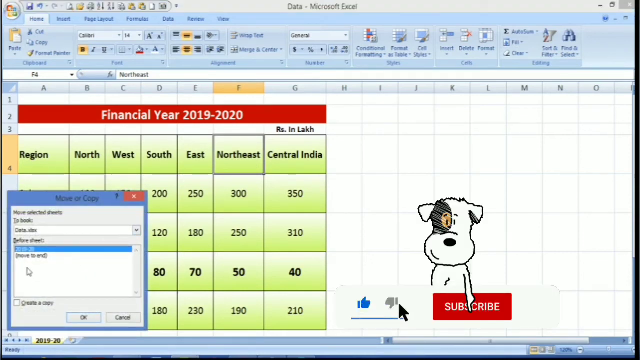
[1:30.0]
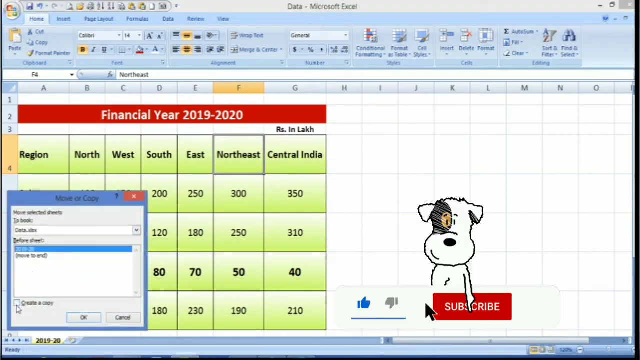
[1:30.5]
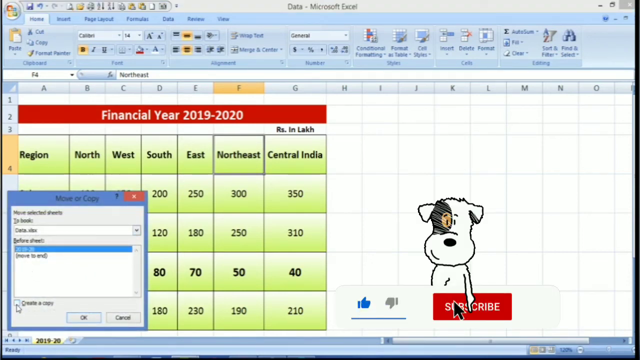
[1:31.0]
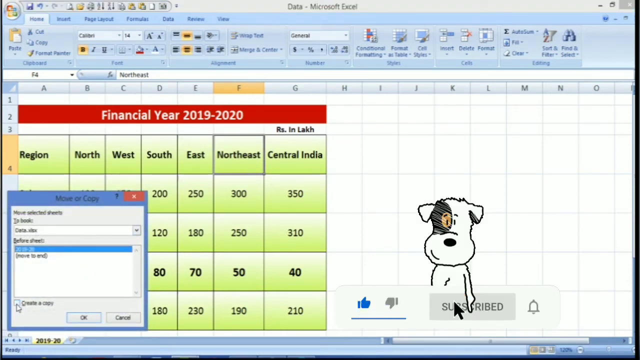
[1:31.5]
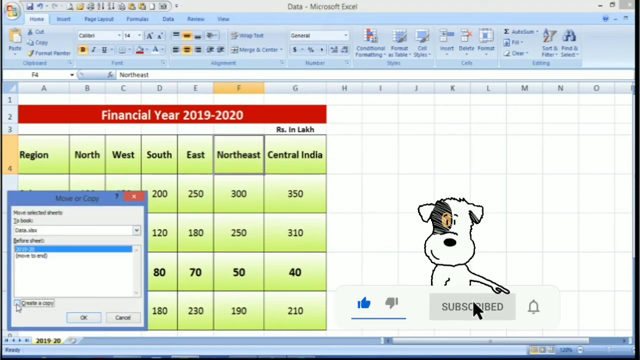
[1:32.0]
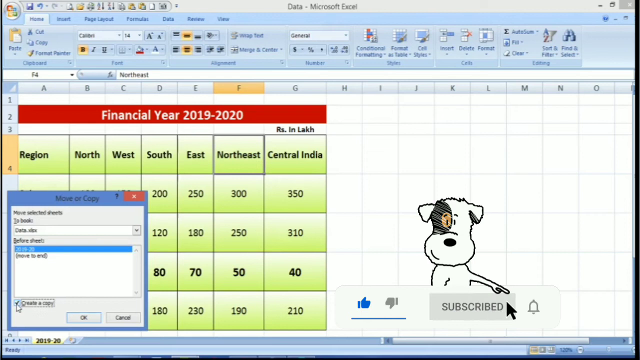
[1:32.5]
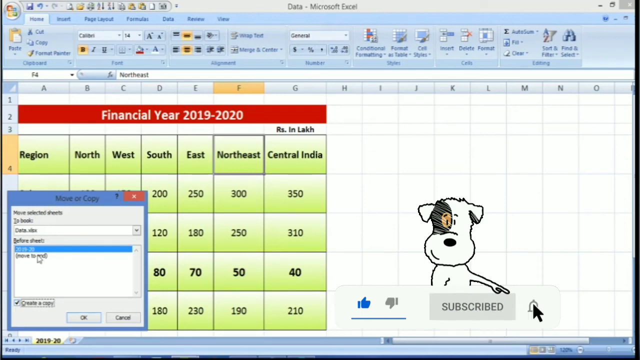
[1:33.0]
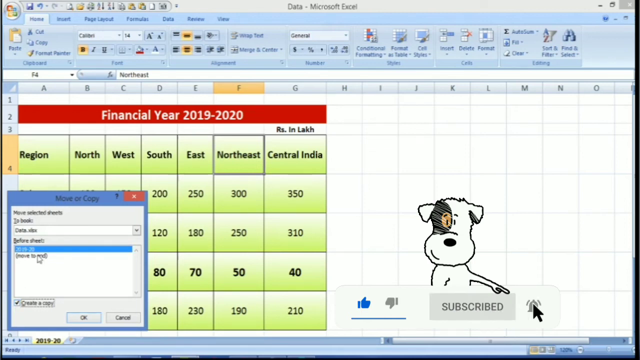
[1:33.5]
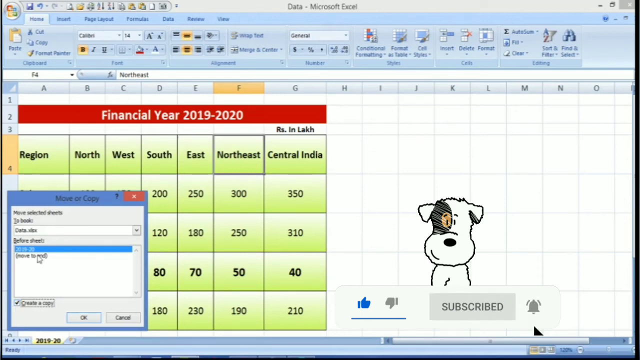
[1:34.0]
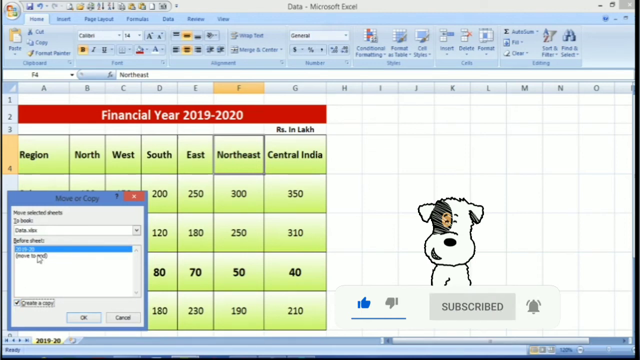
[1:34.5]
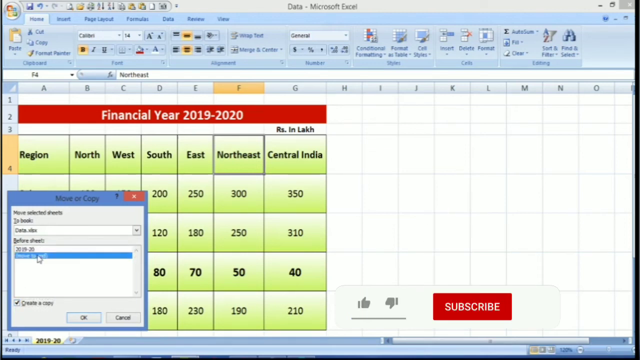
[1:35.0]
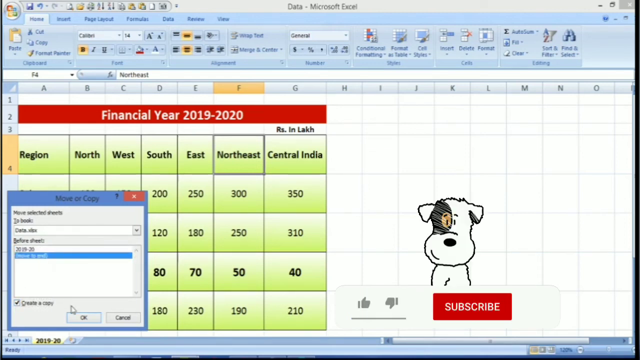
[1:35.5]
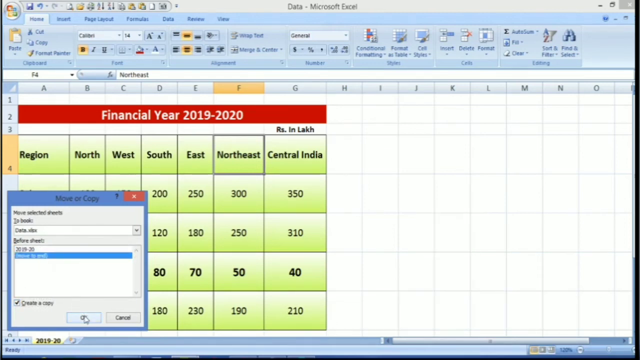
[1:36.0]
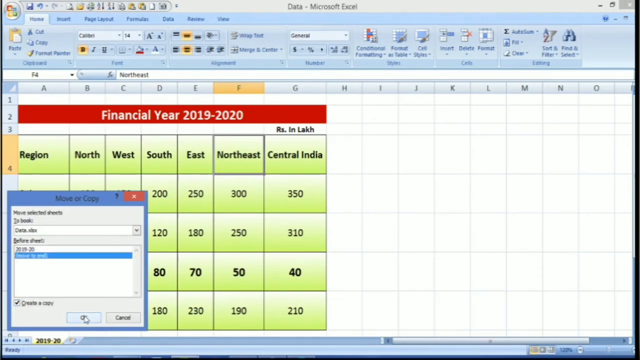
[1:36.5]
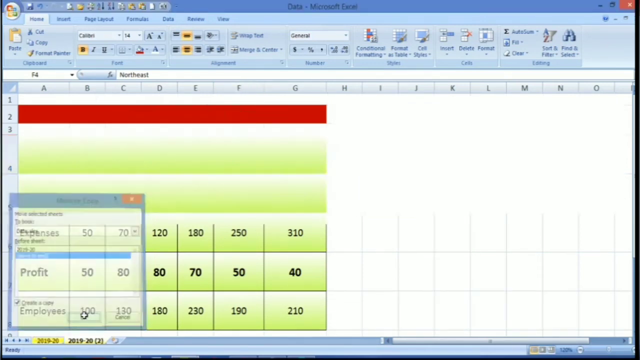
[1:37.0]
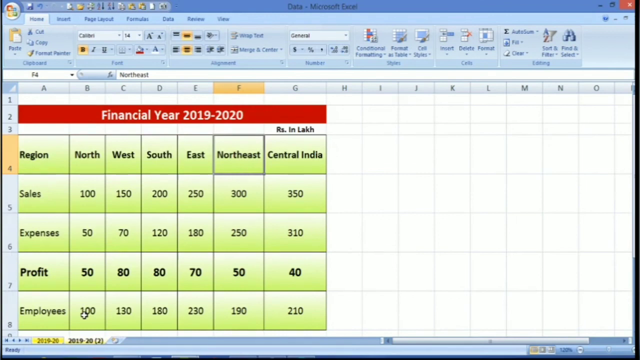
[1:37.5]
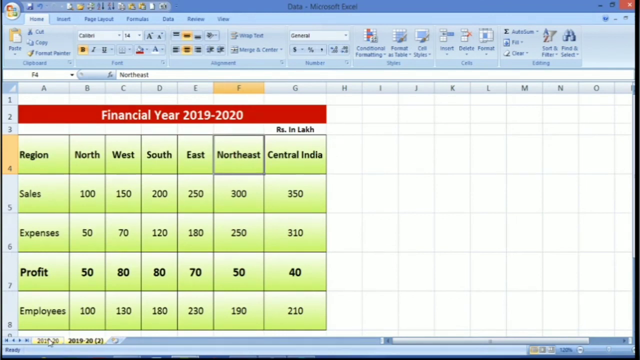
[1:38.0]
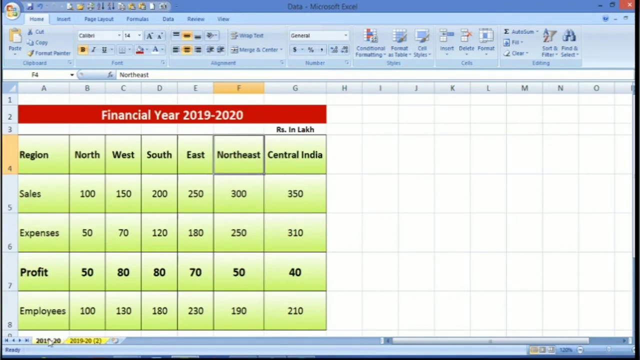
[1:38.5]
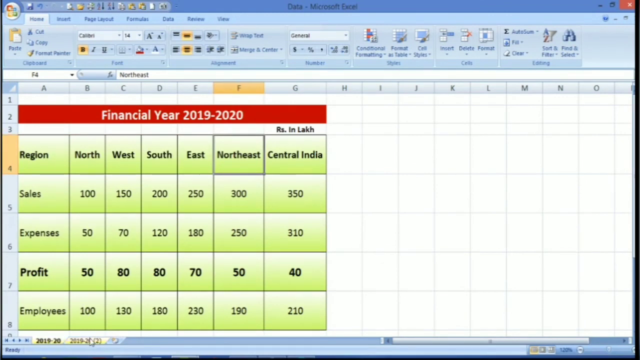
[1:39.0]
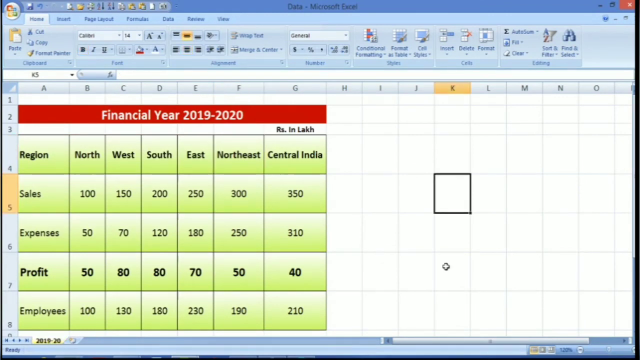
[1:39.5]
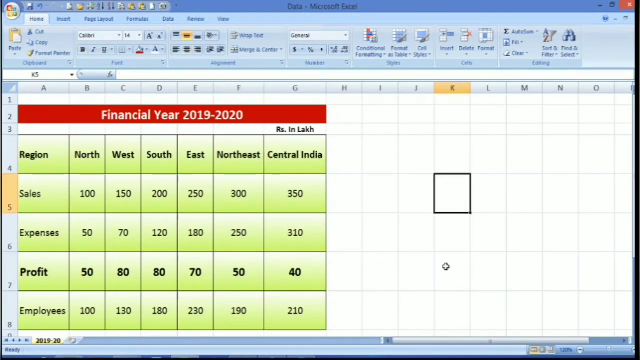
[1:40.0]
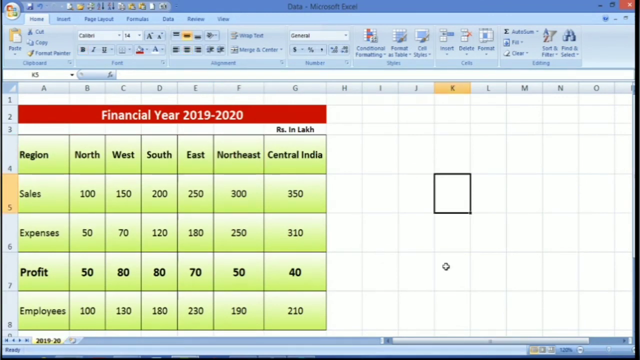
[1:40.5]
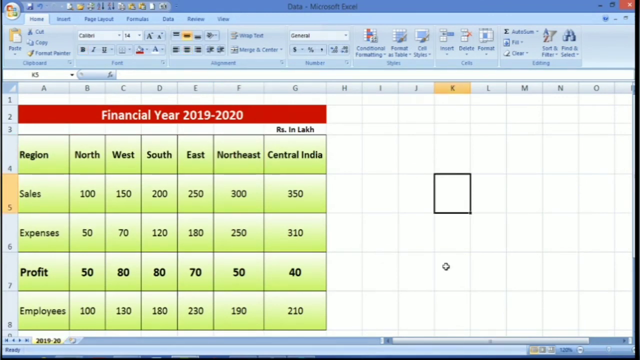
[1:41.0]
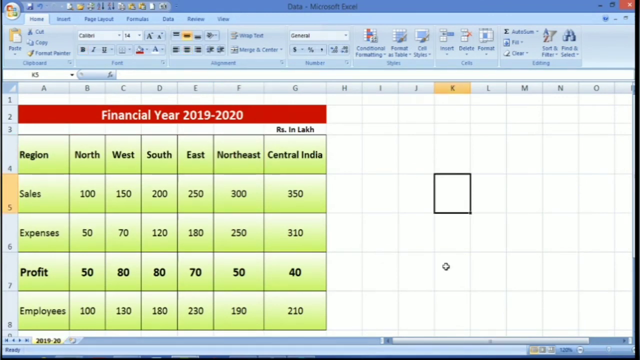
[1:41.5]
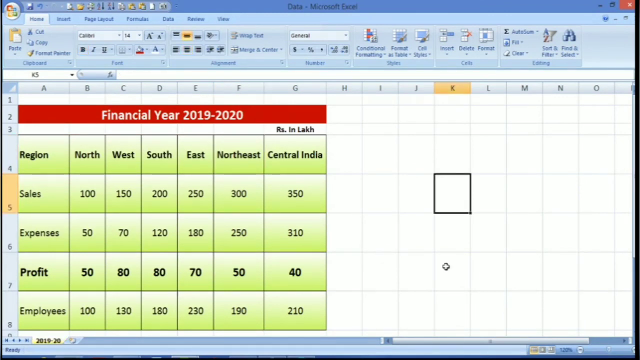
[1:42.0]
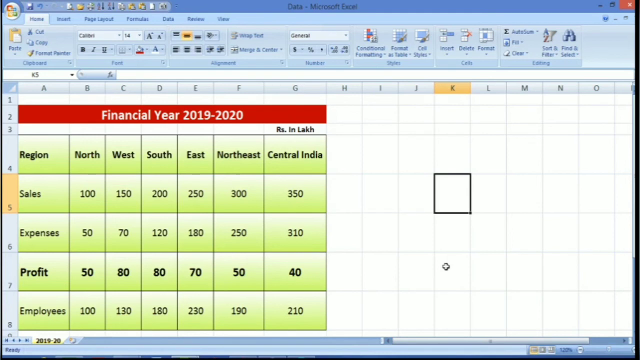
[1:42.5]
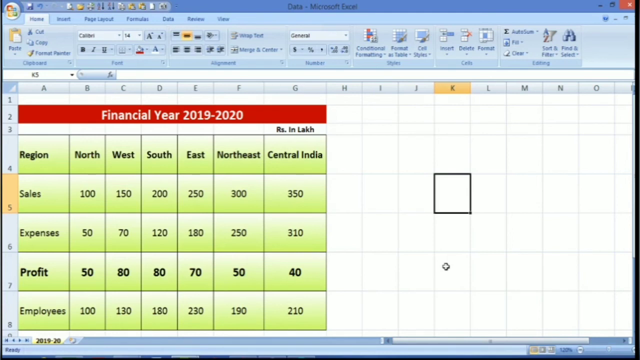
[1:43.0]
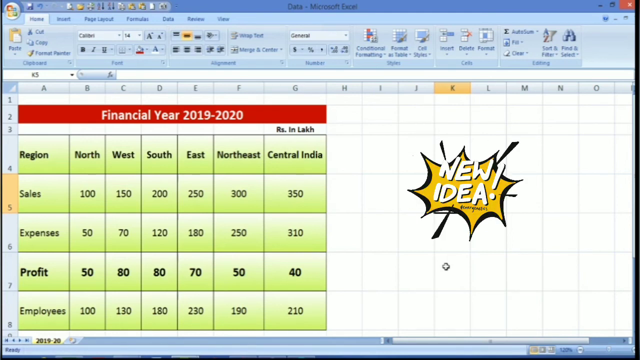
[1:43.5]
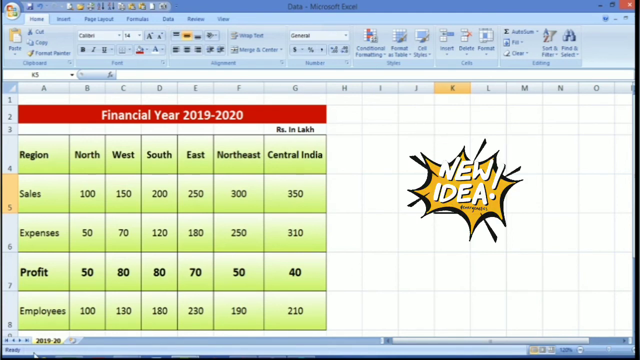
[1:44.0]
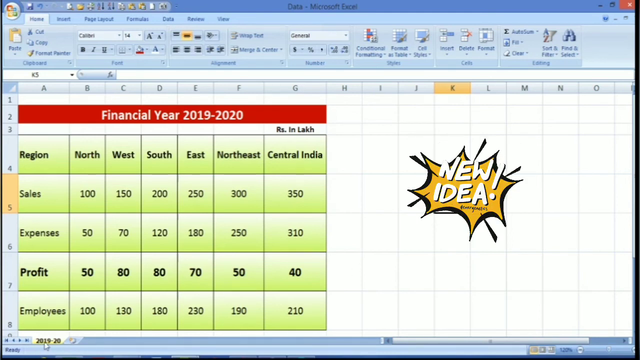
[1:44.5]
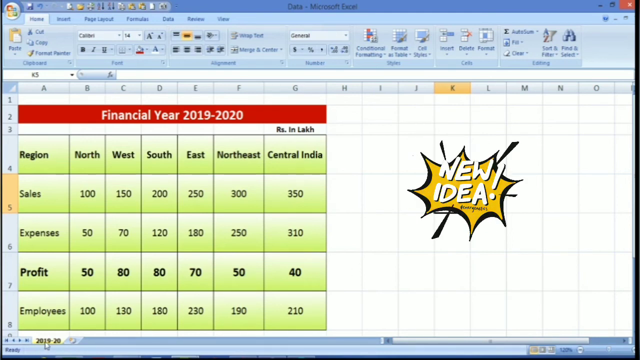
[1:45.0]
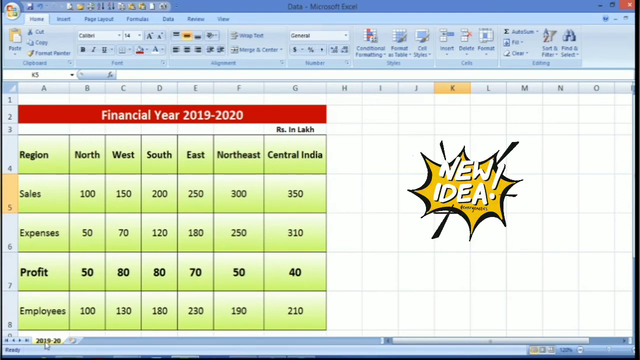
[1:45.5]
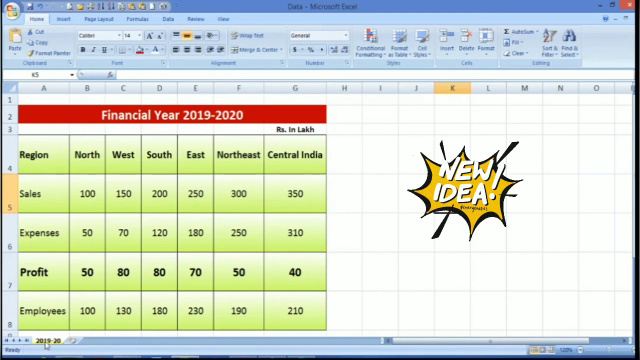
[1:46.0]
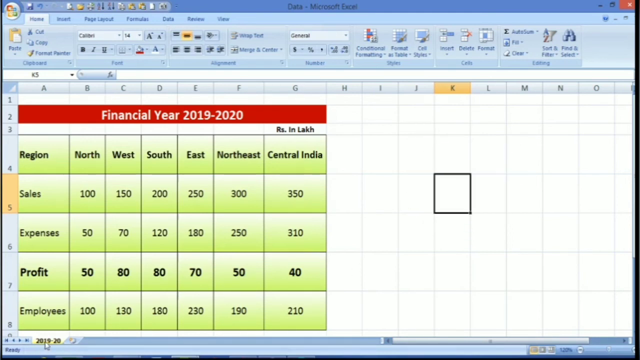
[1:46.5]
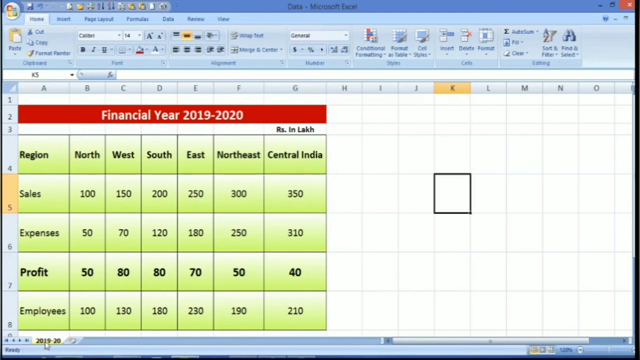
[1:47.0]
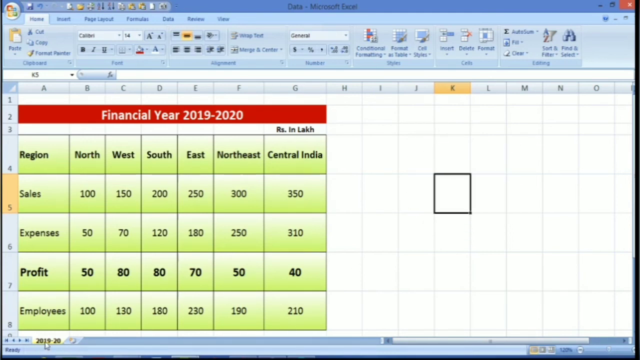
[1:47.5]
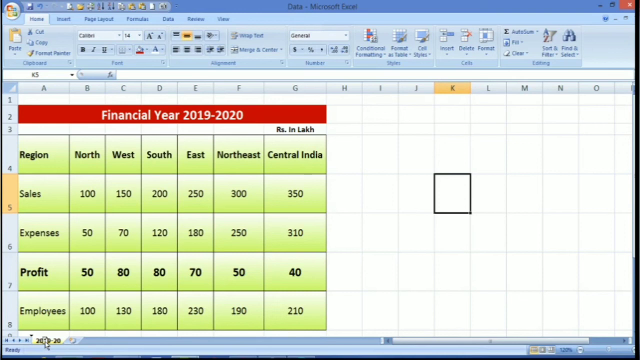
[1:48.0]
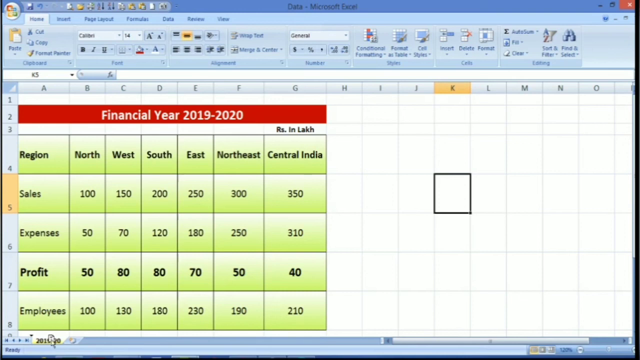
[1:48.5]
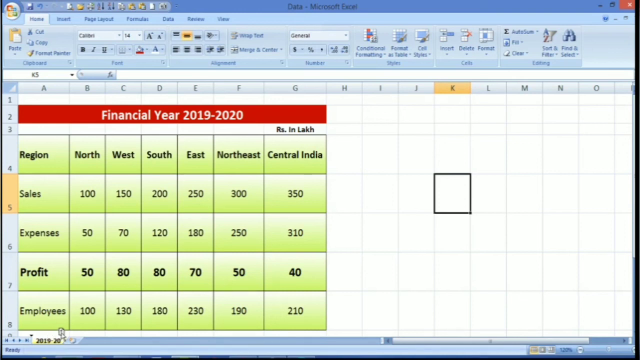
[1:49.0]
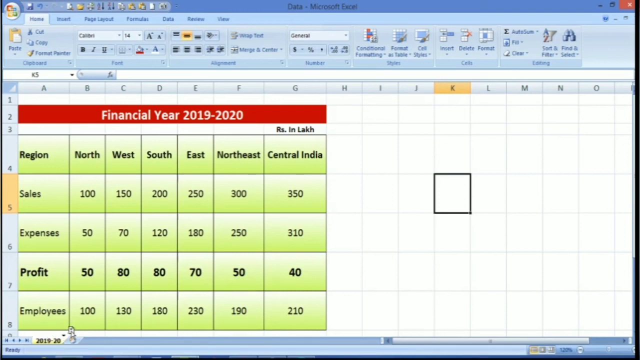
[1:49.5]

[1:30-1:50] The video is slightly wider than it is tall and shows a Microsoft Excel worksheet titled "data" at the top, with the Home tab selected and its buttons and options shown. In the main work area, the title "financial year 2019 to 2020" is written in white on a red background. The column headings include region, north, west, south, east, northeast and central India. In the lower left, a move or copy pop-up window overlays the whole left side of the chart, with its top item selected, though the text cannot be read. On the right side, a small cartoon dog pops up. It is white except for shaded black over its right eye, and it looks toward the viewer. The dog then disappears, and so does the pop-up on the left.